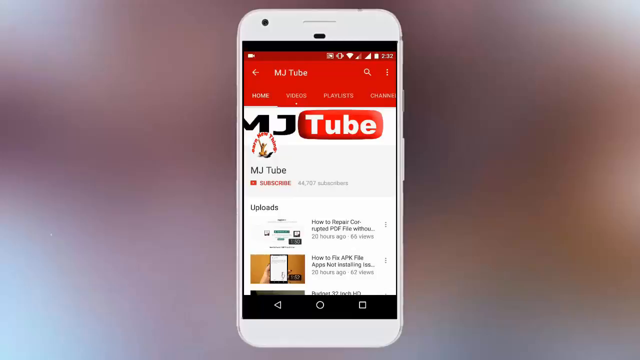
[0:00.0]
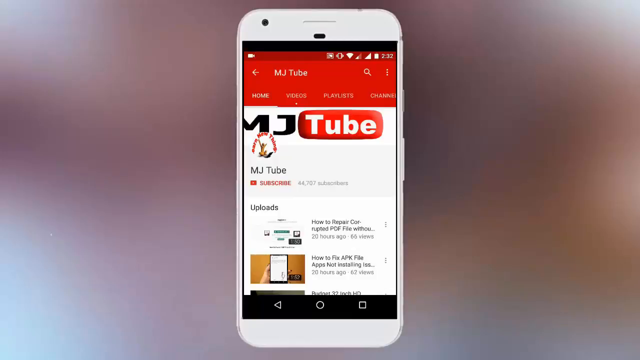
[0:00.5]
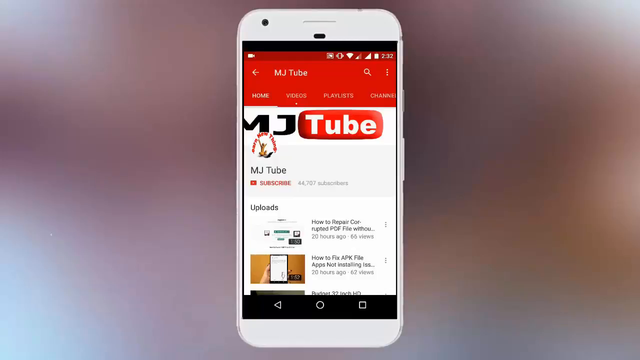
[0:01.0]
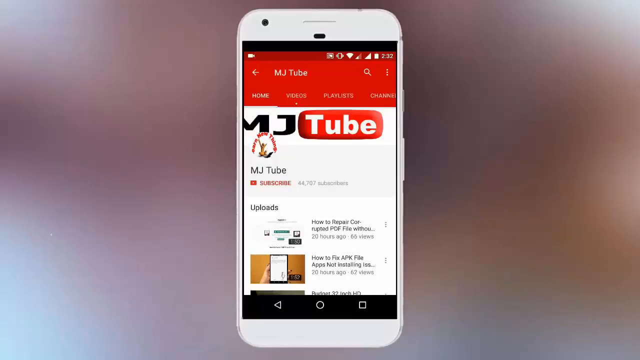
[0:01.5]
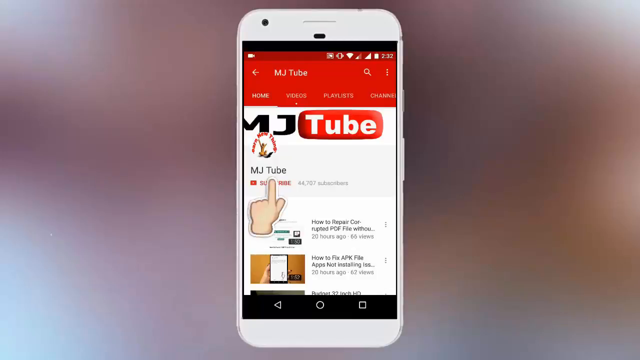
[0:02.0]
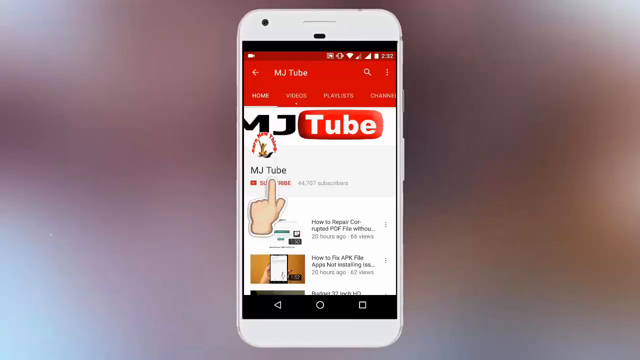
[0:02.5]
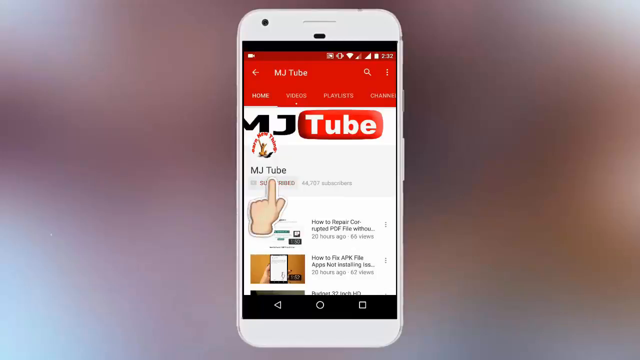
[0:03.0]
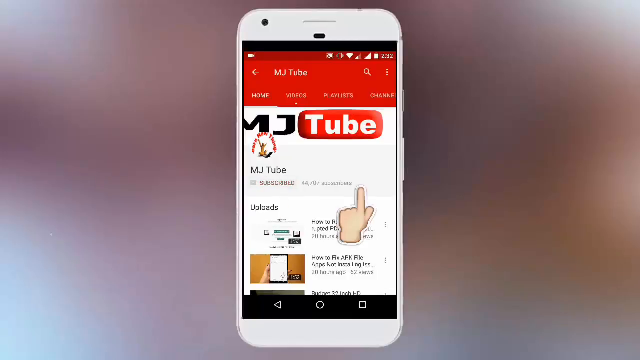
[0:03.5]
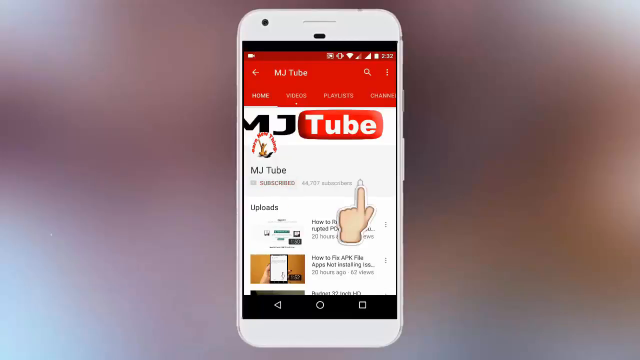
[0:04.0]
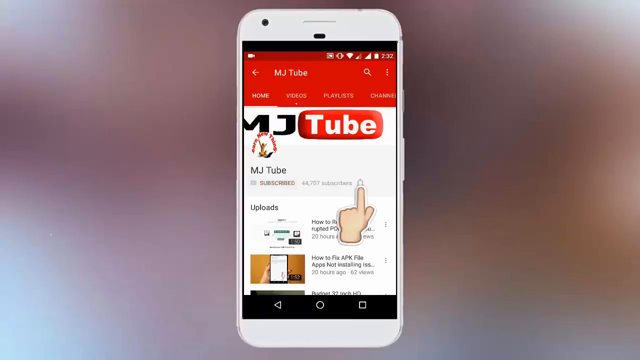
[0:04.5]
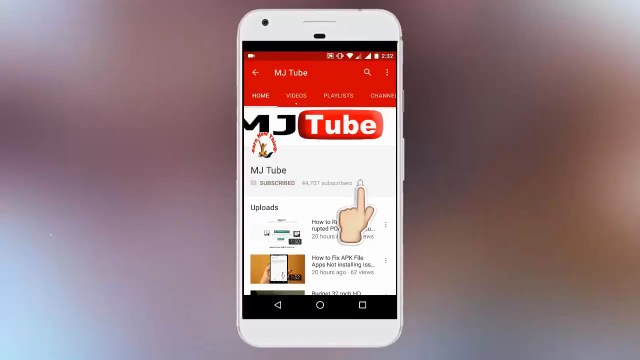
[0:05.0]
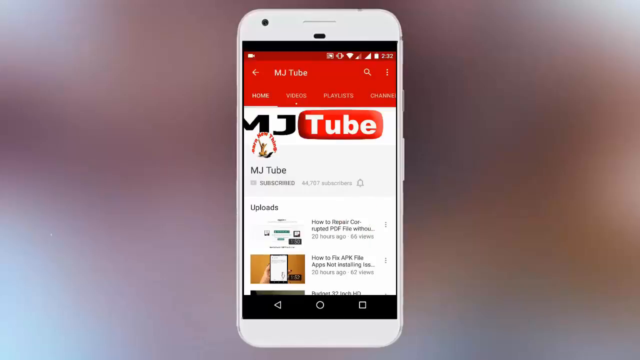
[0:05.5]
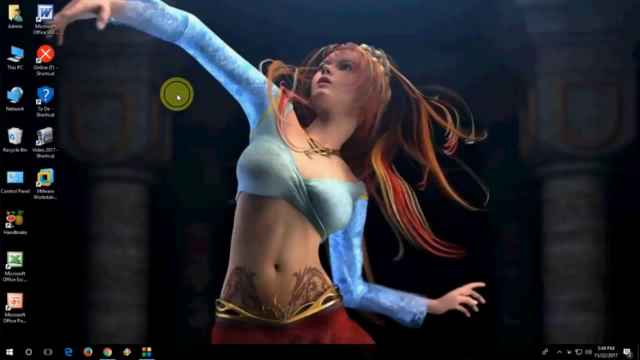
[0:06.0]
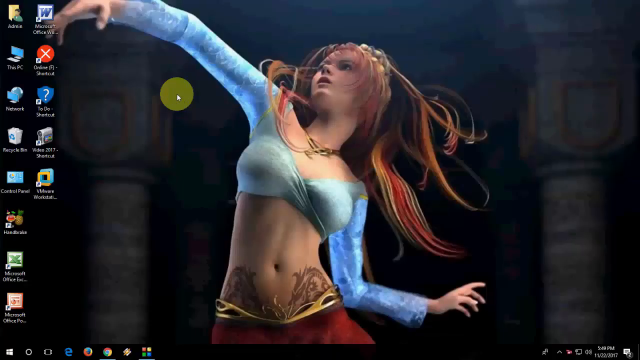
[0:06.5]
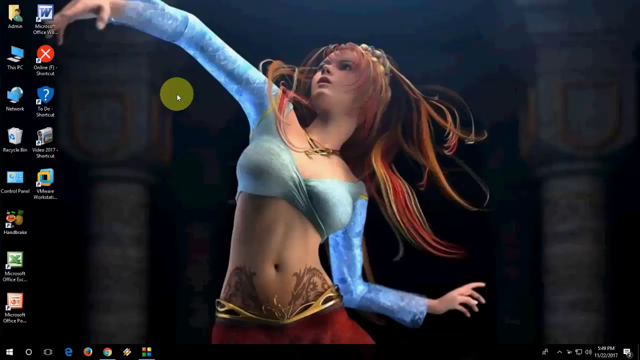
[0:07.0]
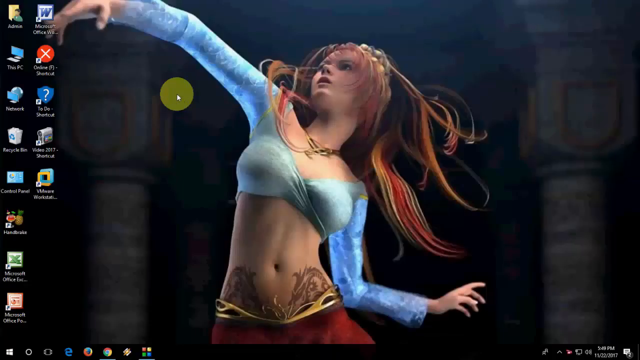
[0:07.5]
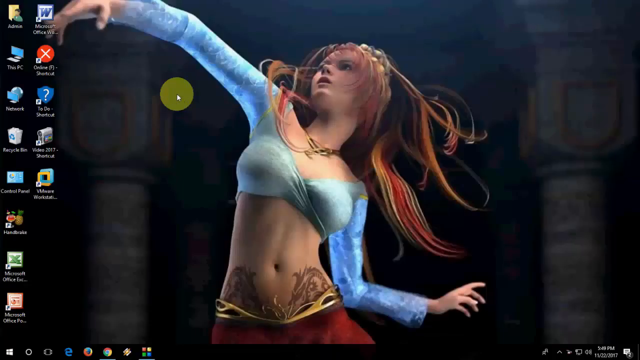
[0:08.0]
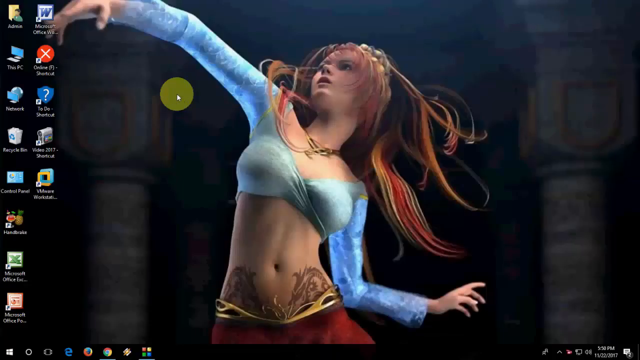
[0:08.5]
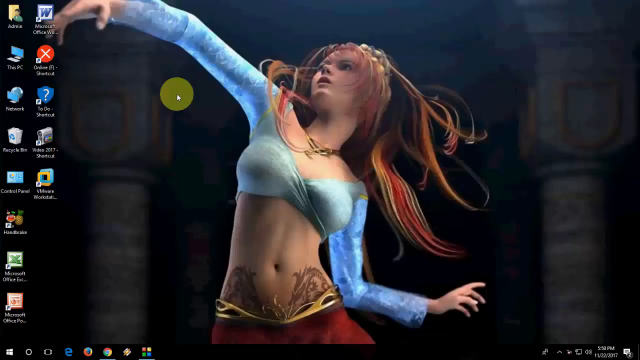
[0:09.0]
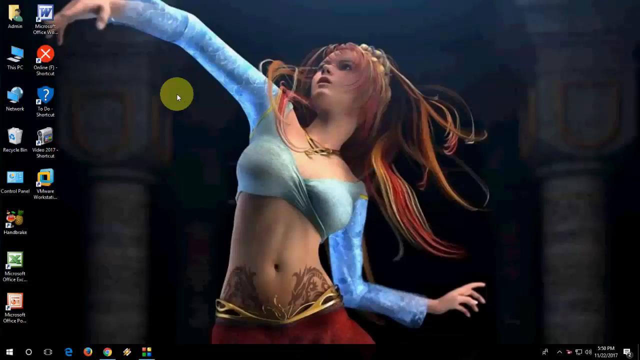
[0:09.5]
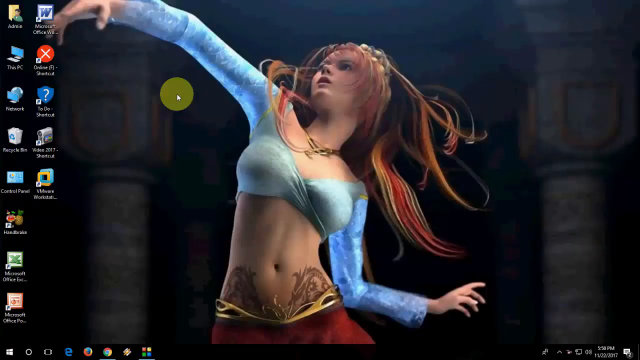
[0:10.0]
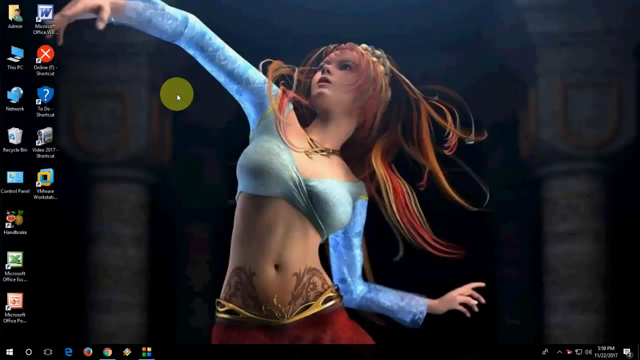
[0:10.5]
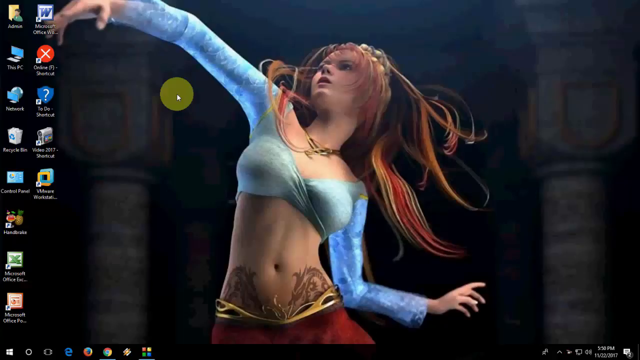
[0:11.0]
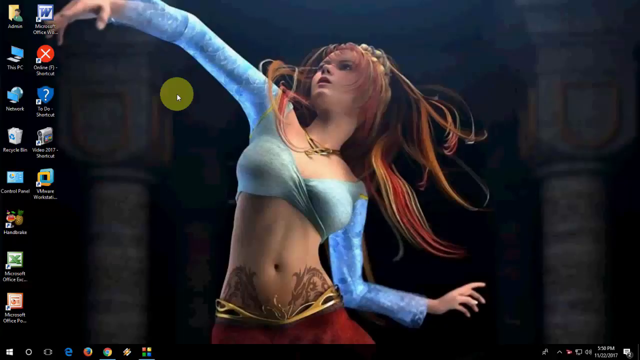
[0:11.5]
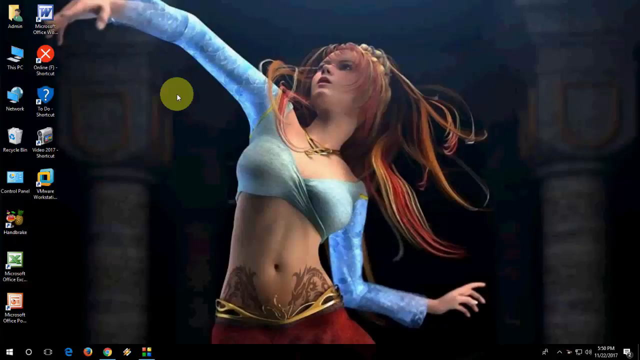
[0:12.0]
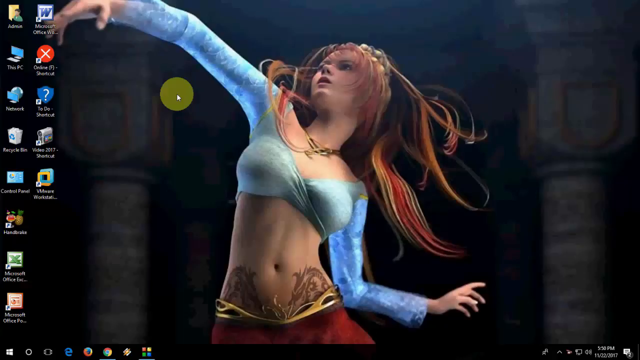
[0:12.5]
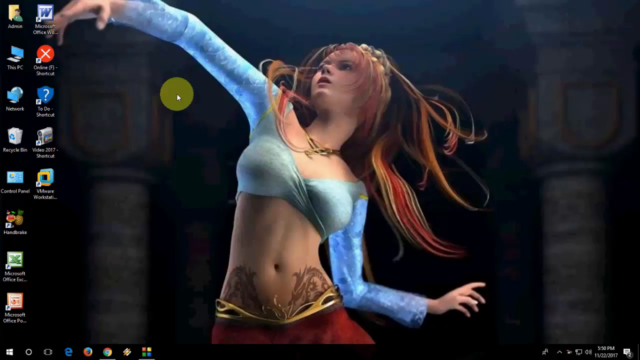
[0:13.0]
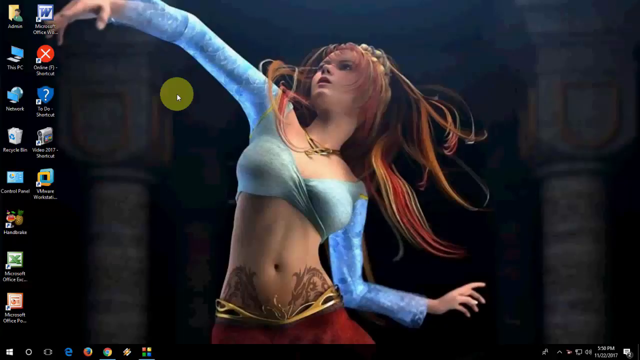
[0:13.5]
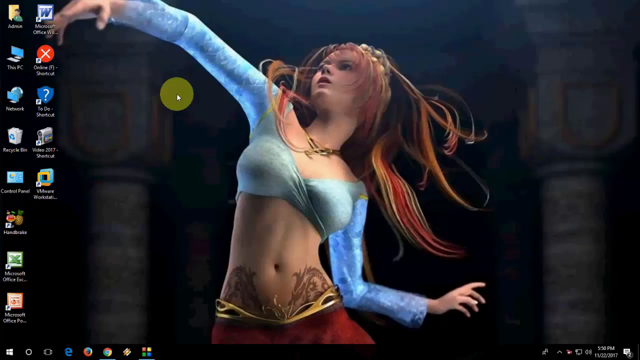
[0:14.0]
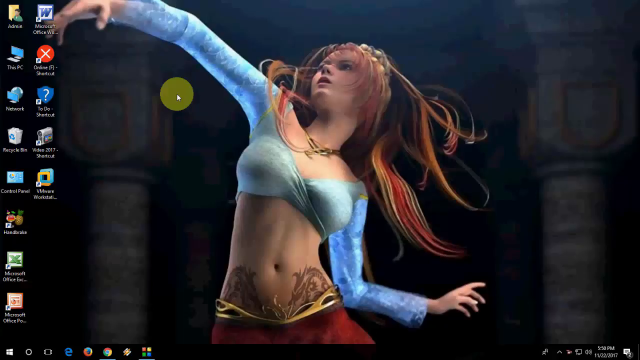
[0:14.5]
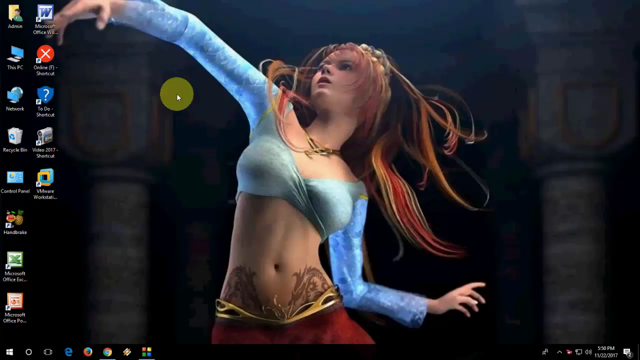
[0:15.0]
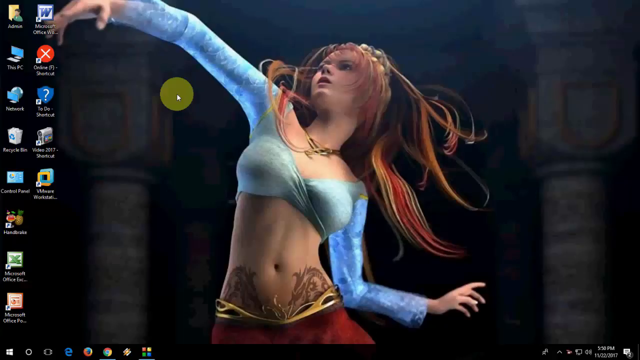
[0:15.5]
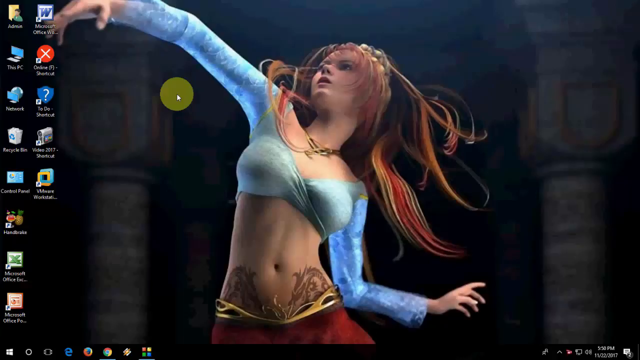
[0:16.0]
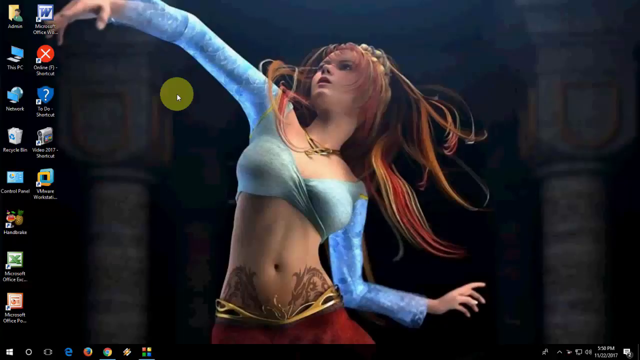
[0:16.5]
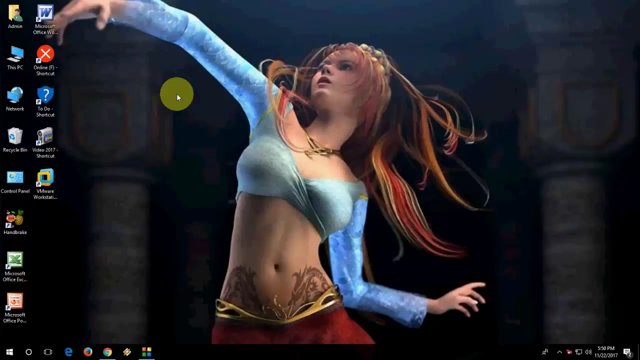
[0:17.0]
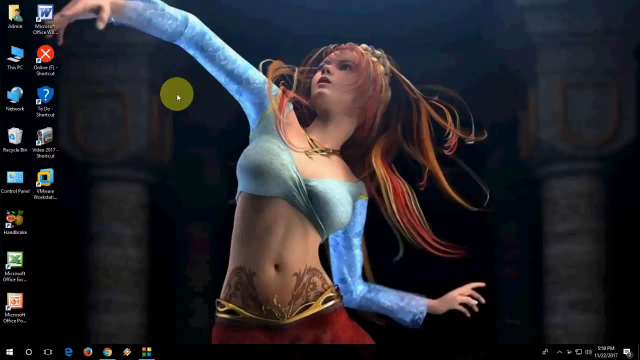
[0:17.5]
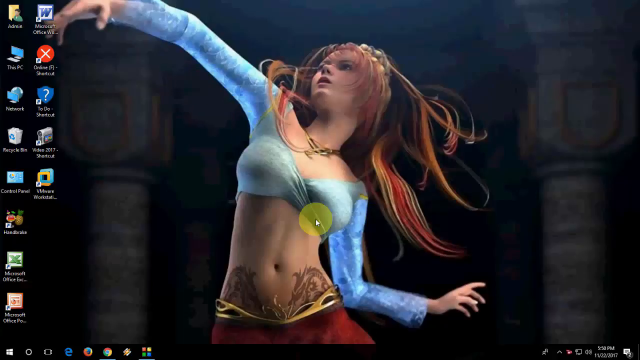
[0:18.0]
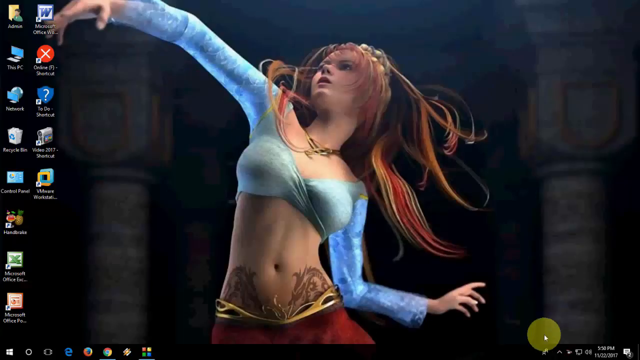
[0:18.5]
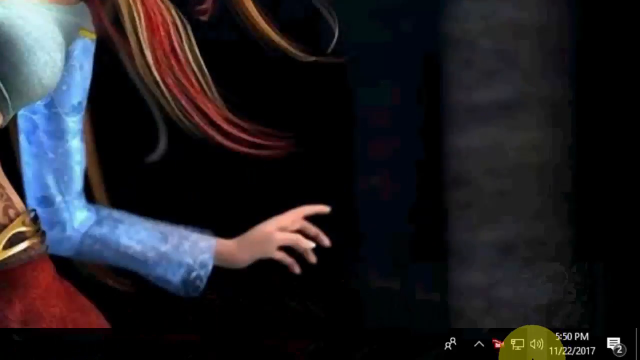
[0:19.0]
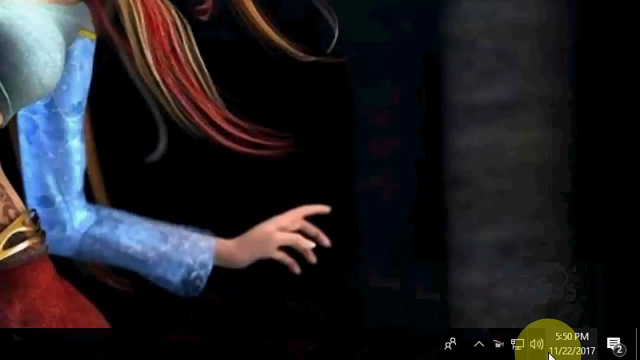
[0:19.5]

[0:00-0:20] The video opens on an image of what looks to be an iPhone 6 or a similar model, a white phone against a blurred background, apparently a green screen. Across the top of the phone's screen is red with small white letters reading "mj tube", and underneath it "mj tube" appears in big writing. Once the phone comes on, a little hand pops up on the screen and moves around, pushing "mj tube". The phone then disappears, and an image of a dancing anime character appears as a background image. A mouse cursor appears on it and starts moving around.